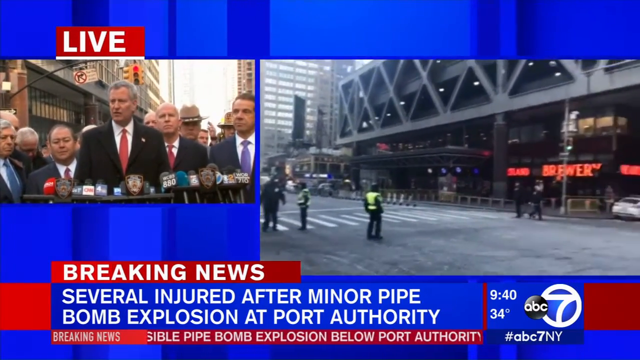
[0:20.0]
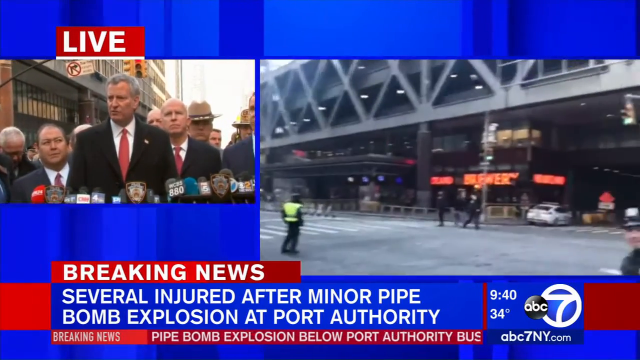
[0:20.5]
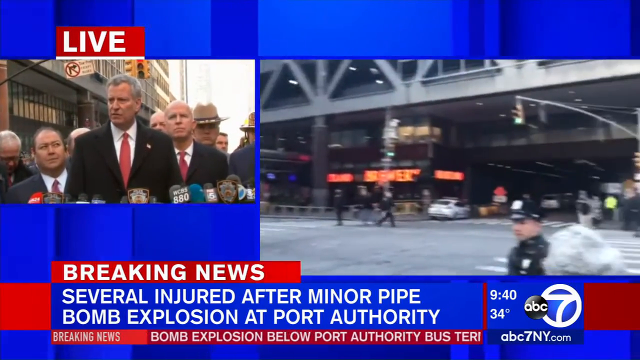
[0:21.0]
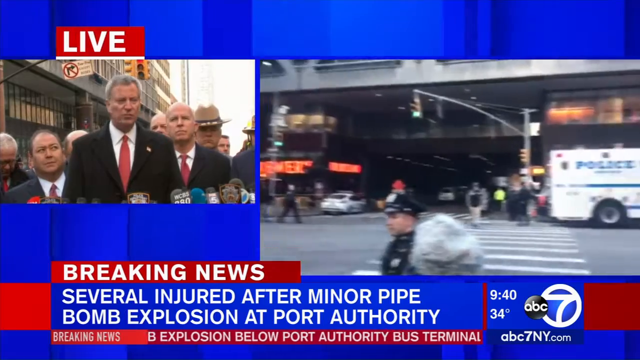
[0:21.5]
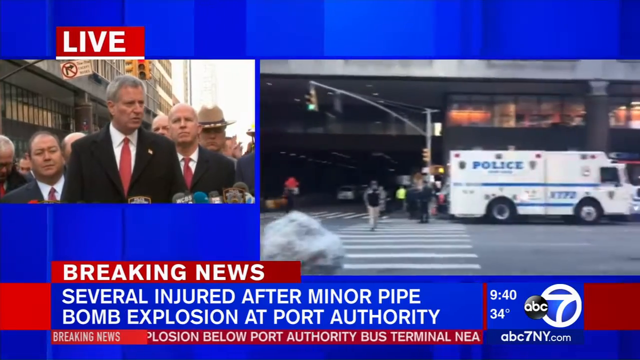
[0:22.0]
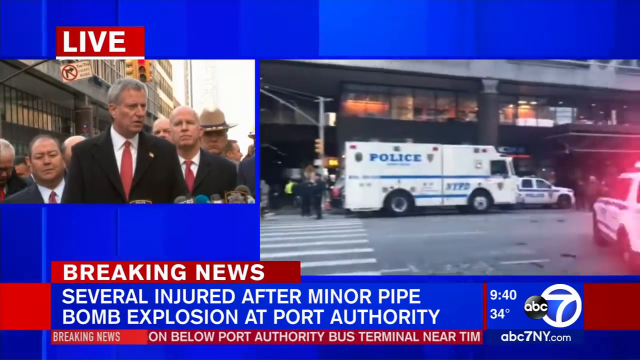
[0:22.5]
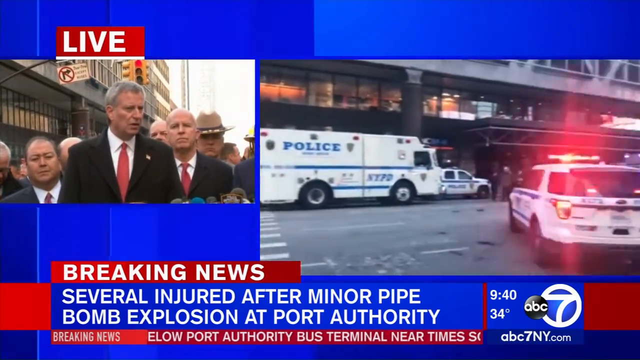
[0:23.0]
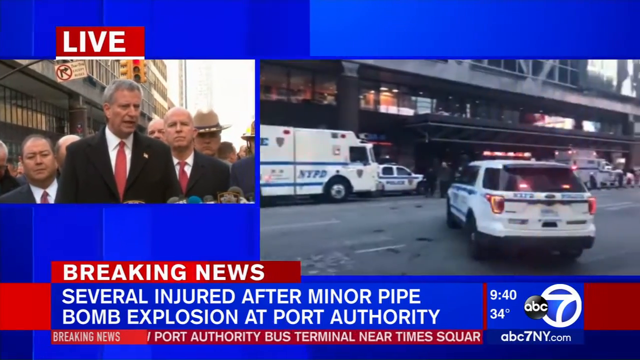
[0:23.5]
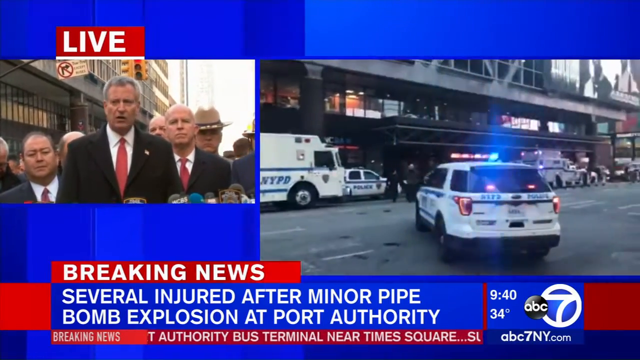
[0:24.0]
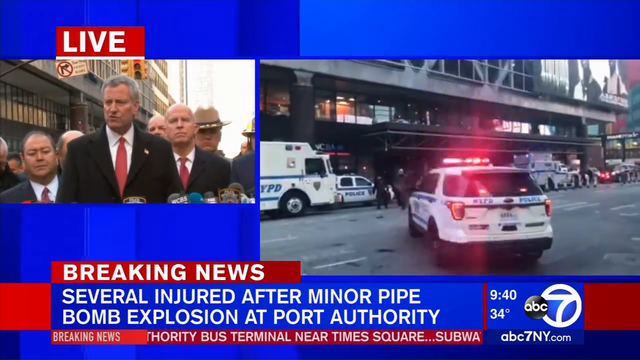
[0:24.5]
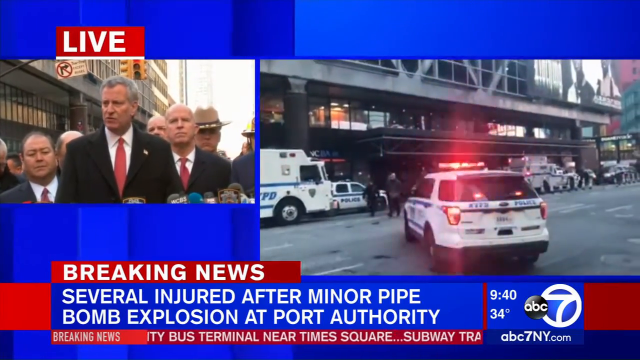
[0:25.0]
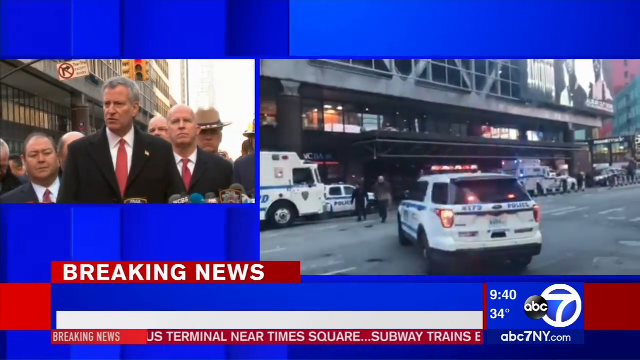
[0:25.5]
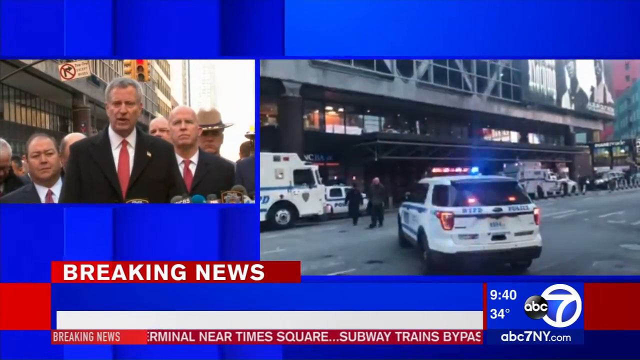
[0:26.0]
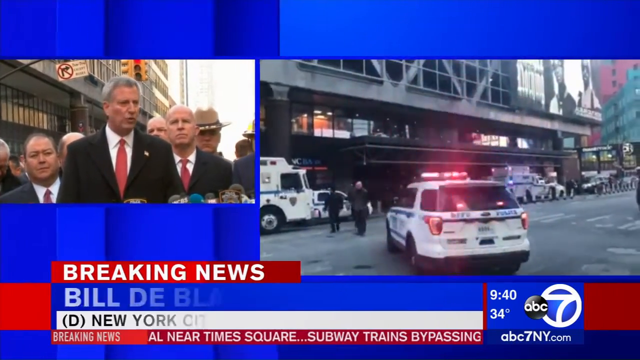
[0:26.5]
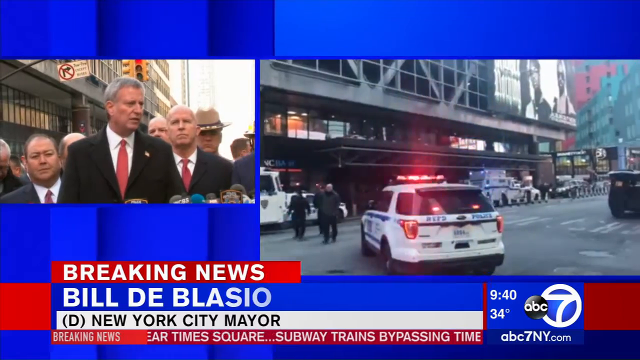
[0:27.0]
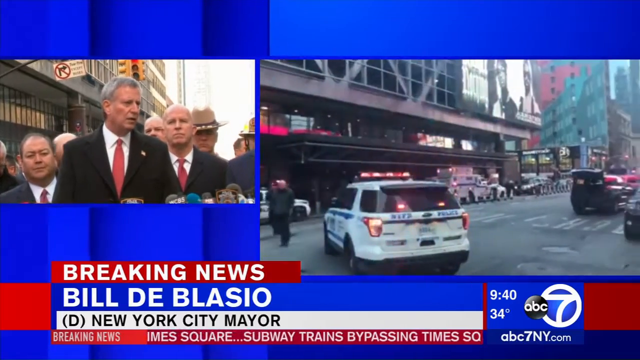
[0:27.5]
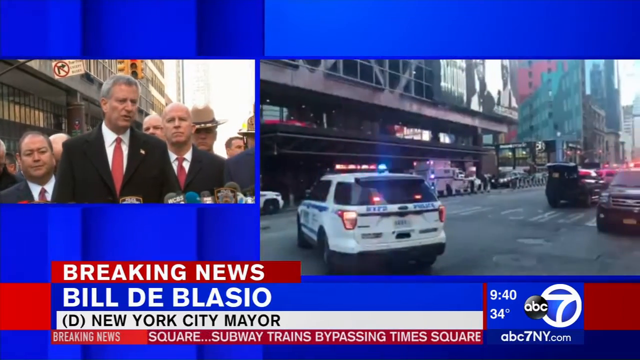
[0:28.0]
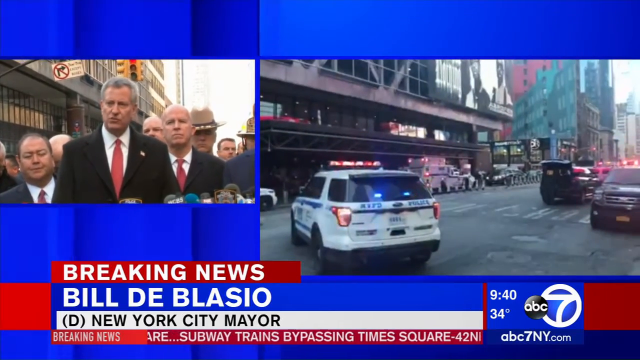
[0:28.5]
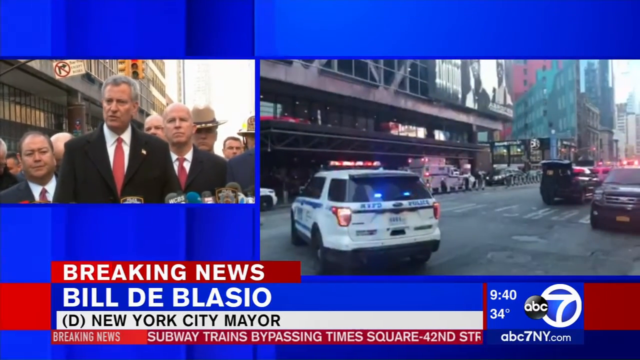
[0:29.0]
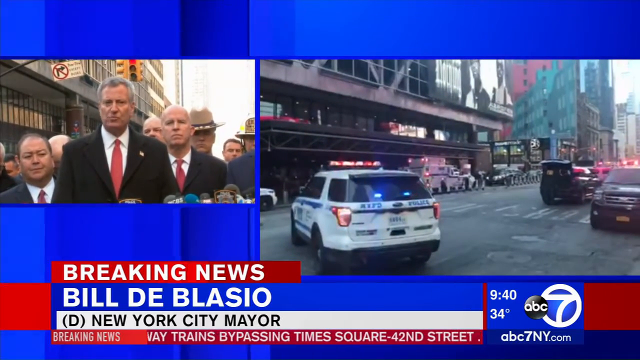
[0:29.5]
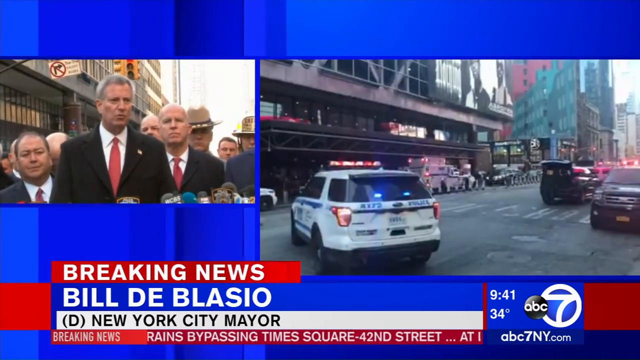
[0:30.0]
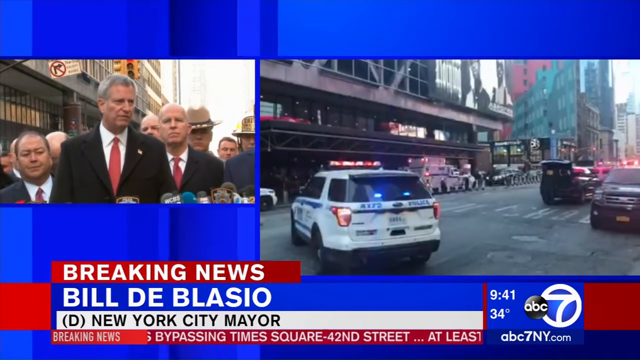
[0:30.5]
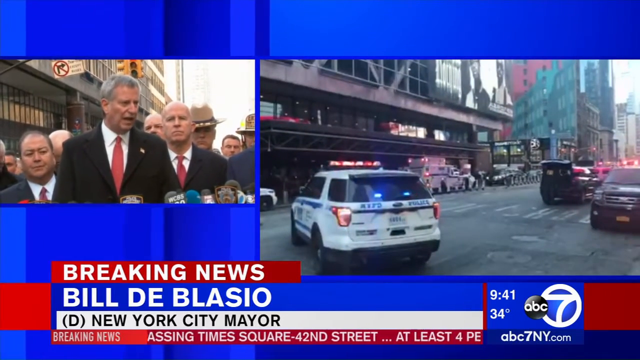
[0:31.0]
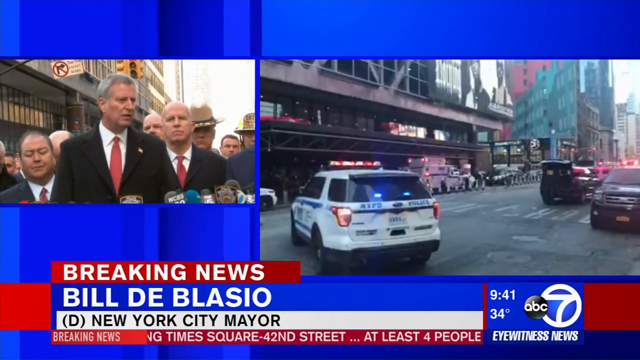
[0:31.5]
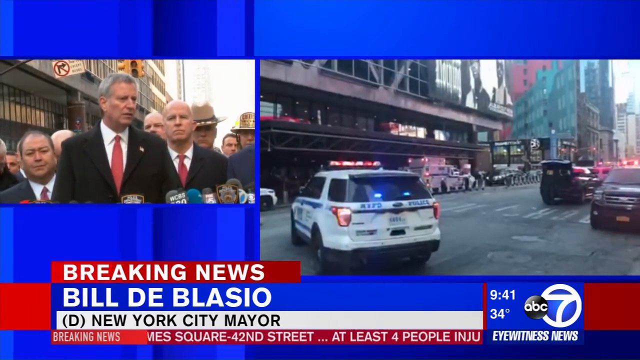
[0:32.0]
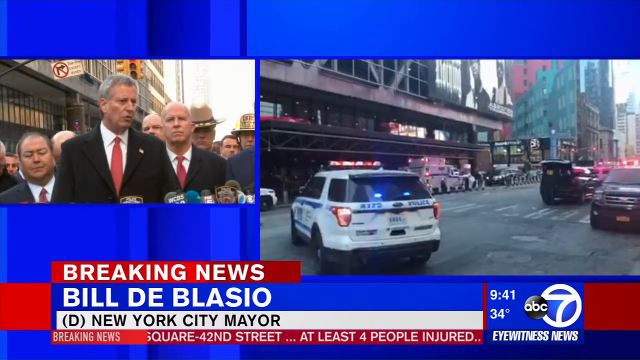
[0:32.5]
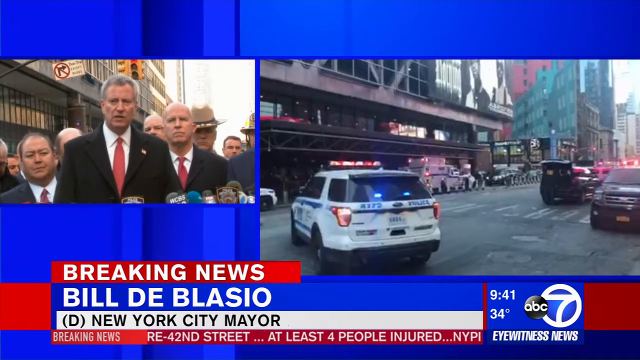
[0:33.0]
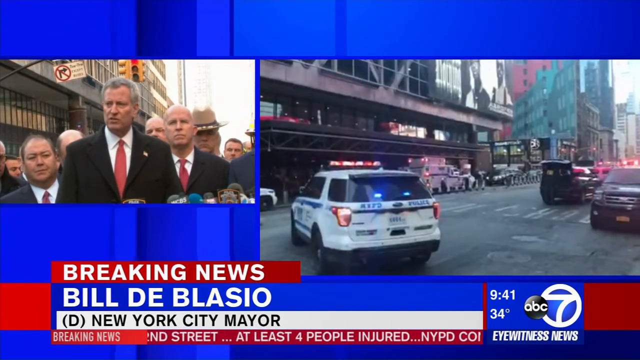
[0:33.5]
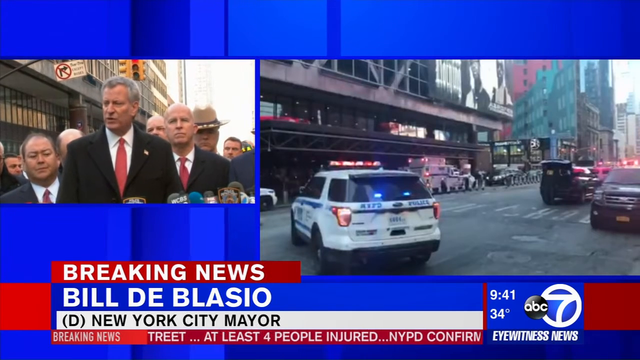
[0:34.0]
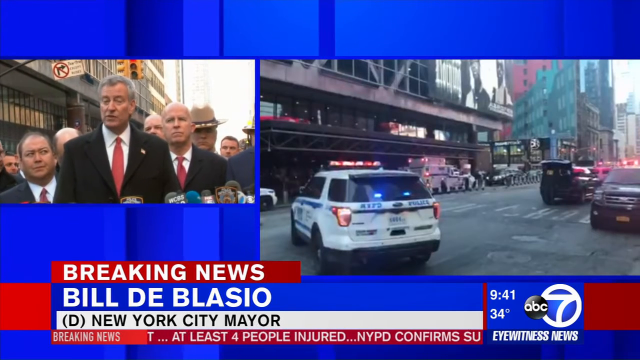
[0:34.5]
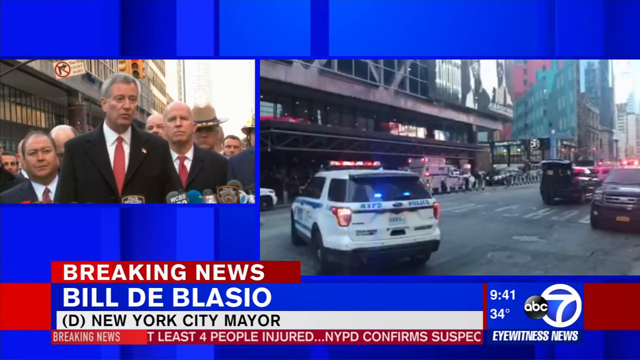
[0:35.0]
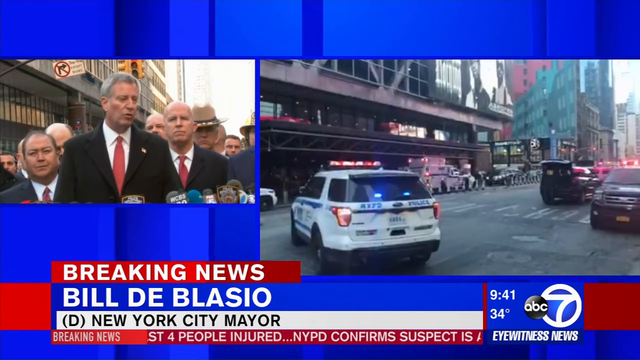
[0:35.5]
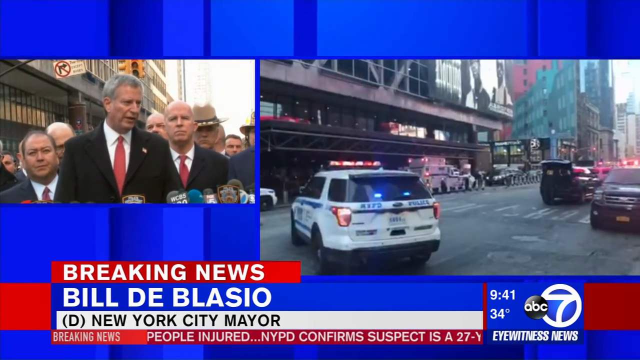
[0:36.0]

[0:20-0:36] More footage shows the scene and the surrounding area. Bill de Blasio, the New York City Mayor, speaks at the press conference with various police and security behind him. Many vehicles are outside the building where the pipe bomb exploded.